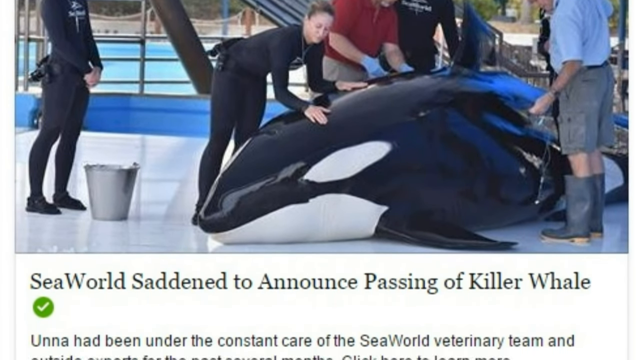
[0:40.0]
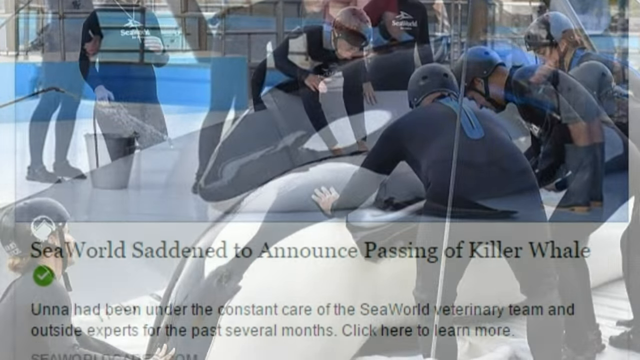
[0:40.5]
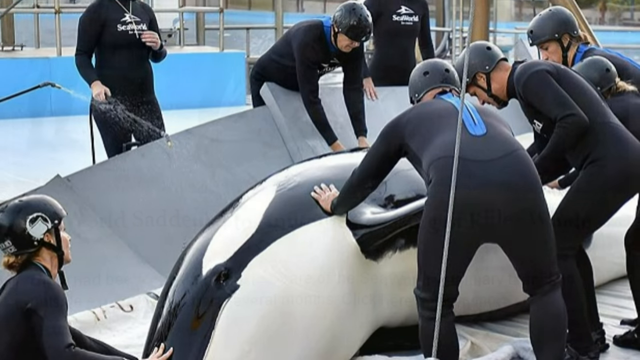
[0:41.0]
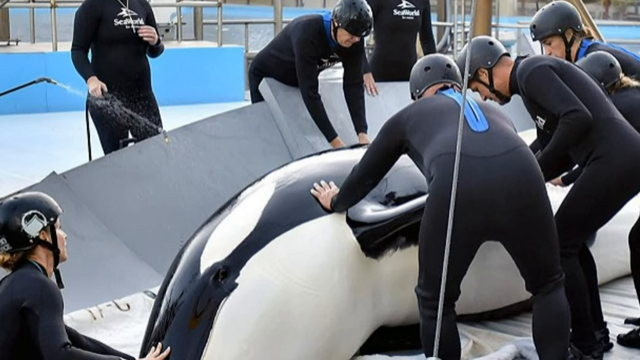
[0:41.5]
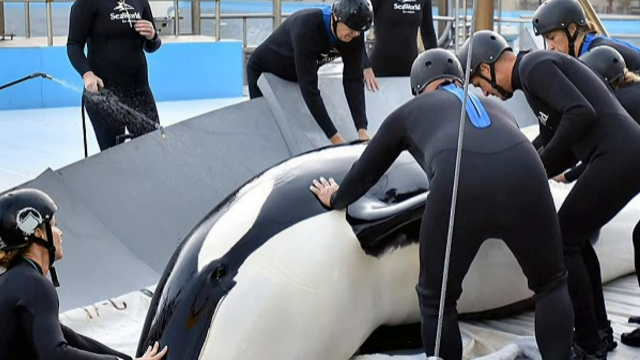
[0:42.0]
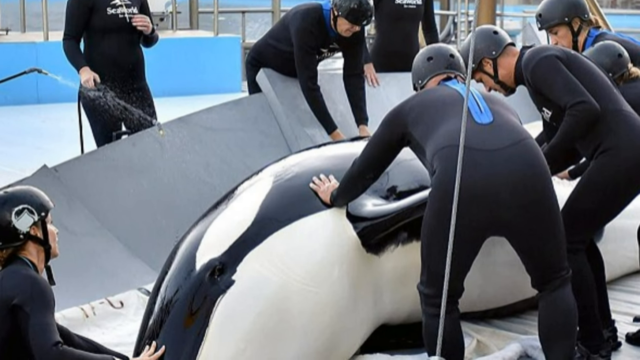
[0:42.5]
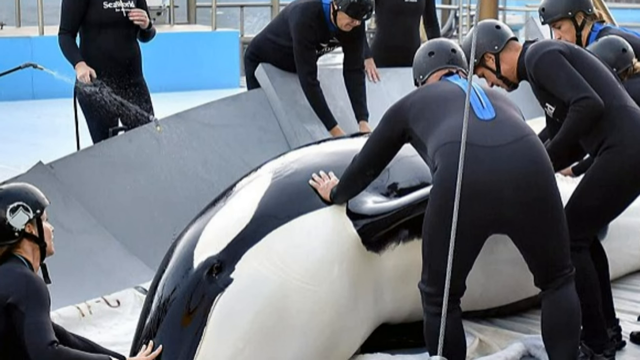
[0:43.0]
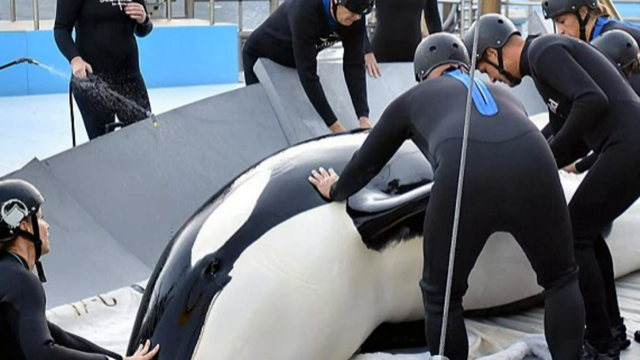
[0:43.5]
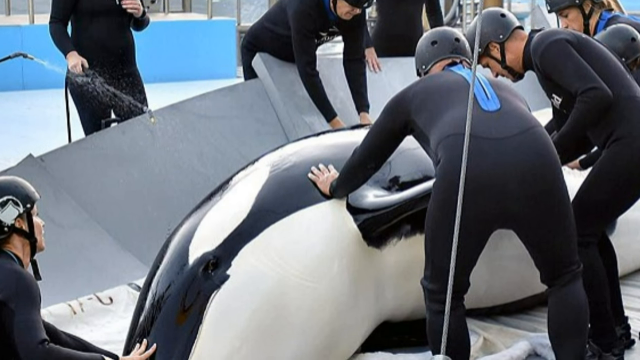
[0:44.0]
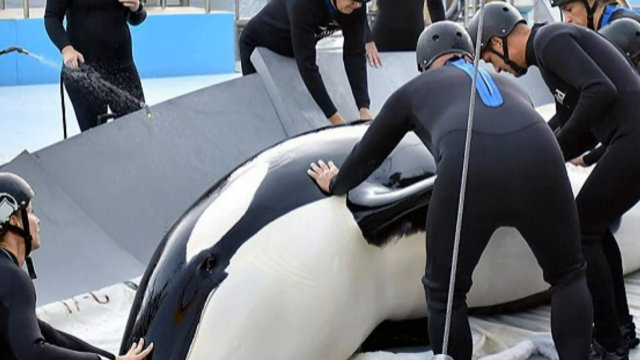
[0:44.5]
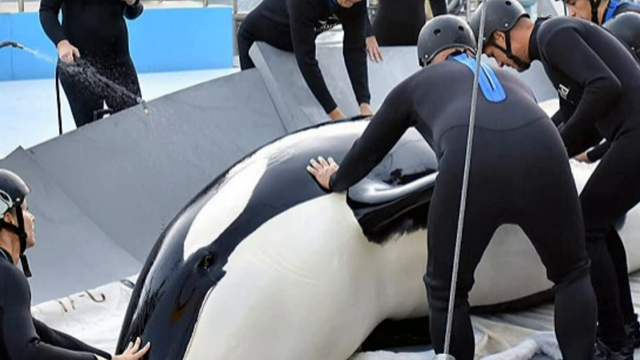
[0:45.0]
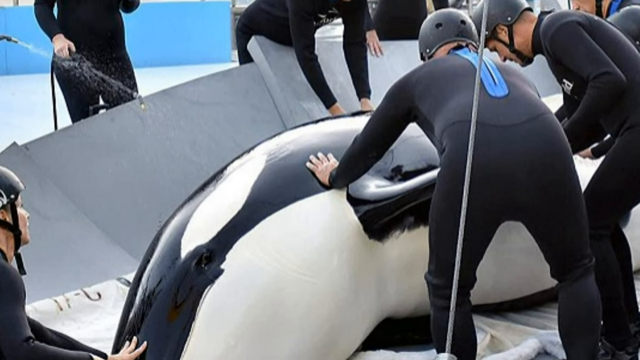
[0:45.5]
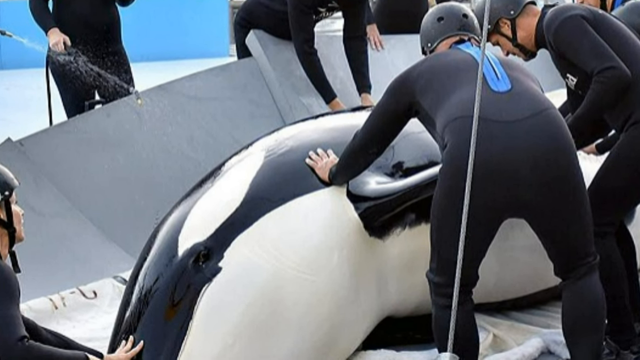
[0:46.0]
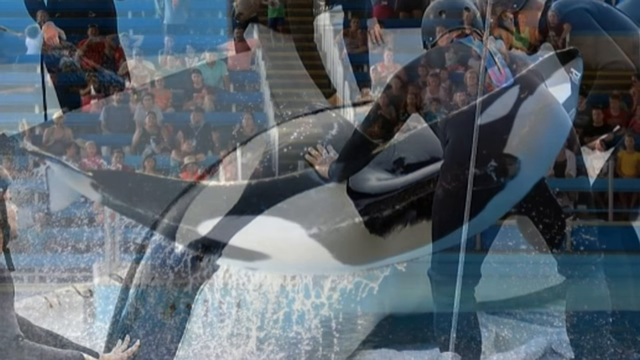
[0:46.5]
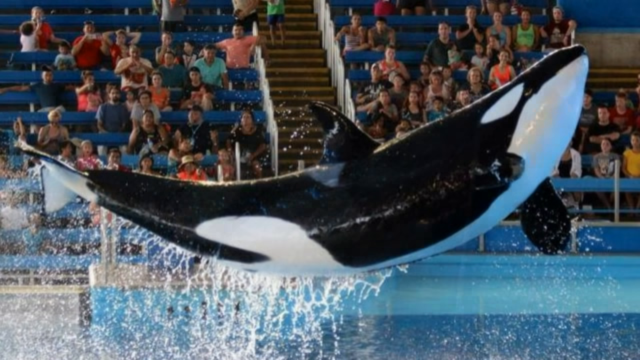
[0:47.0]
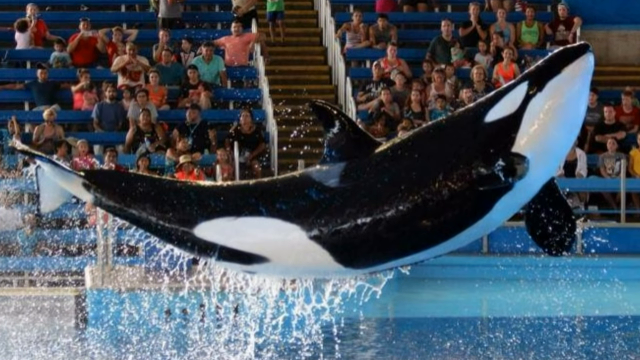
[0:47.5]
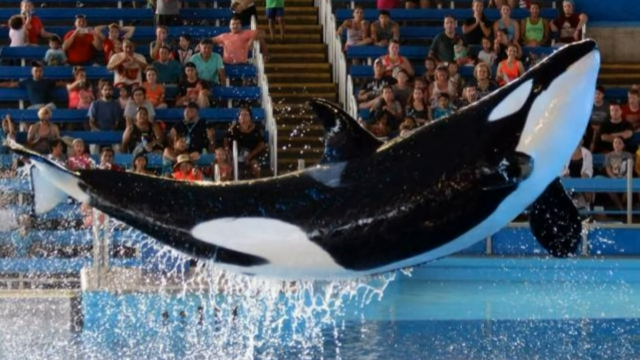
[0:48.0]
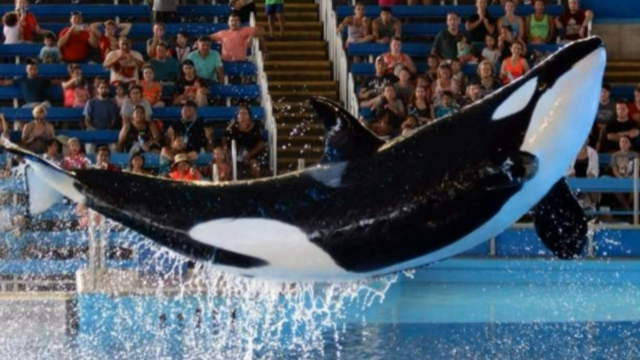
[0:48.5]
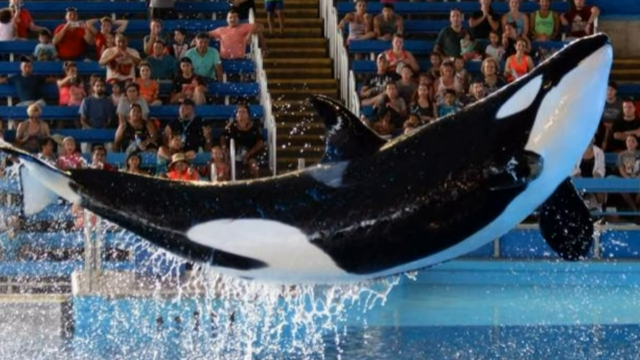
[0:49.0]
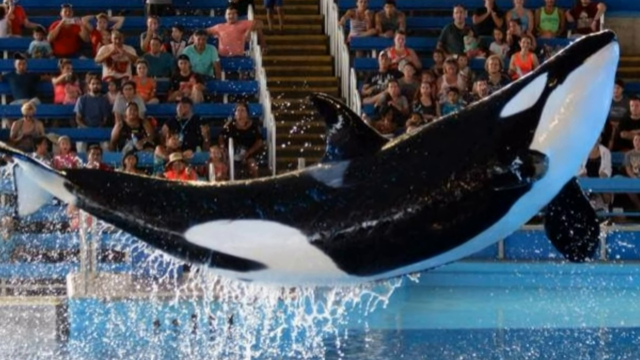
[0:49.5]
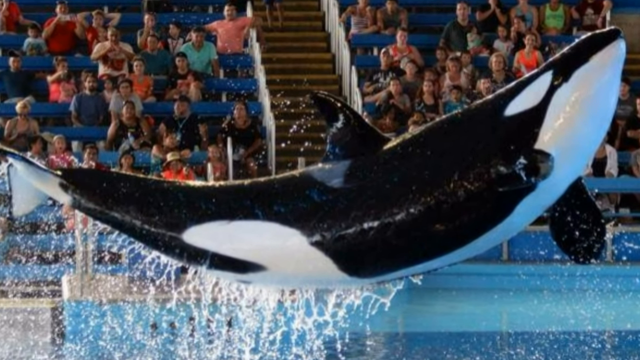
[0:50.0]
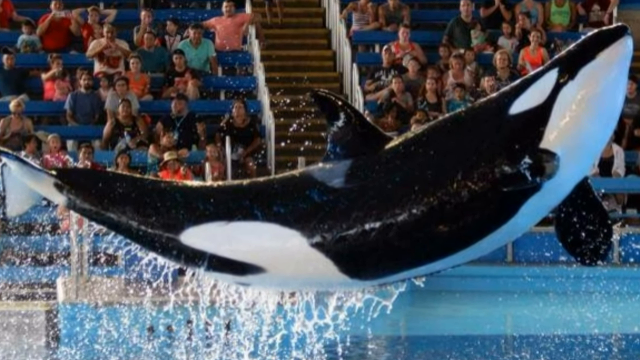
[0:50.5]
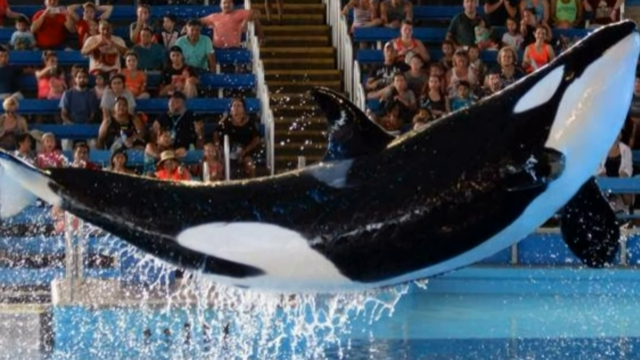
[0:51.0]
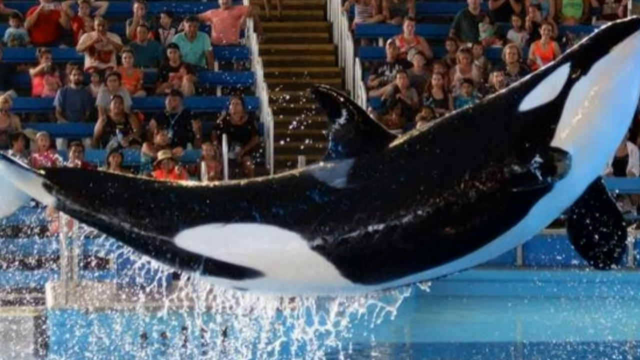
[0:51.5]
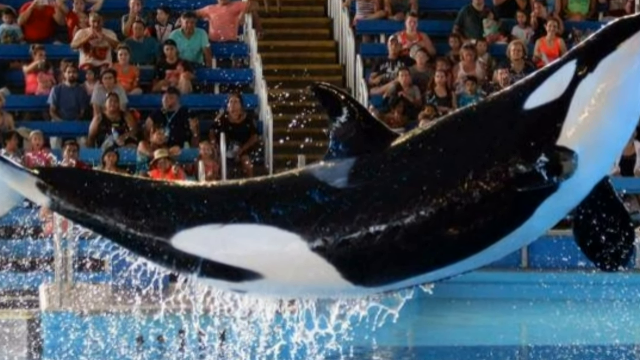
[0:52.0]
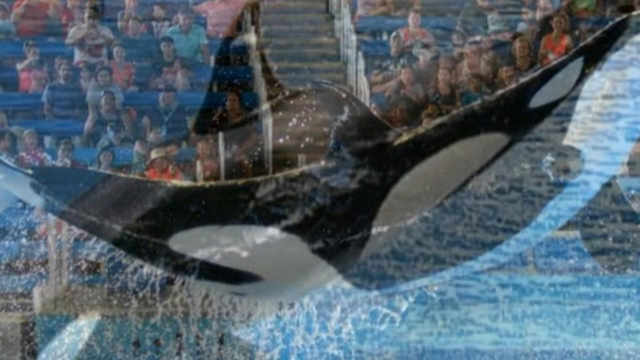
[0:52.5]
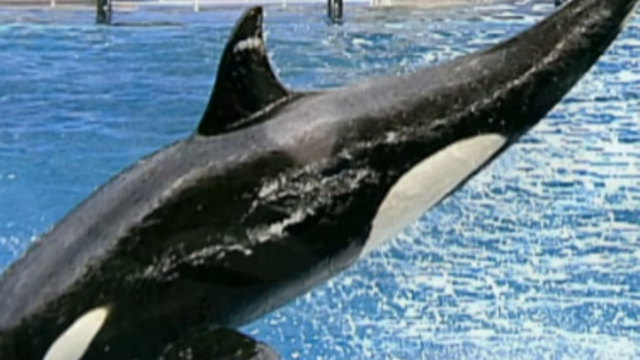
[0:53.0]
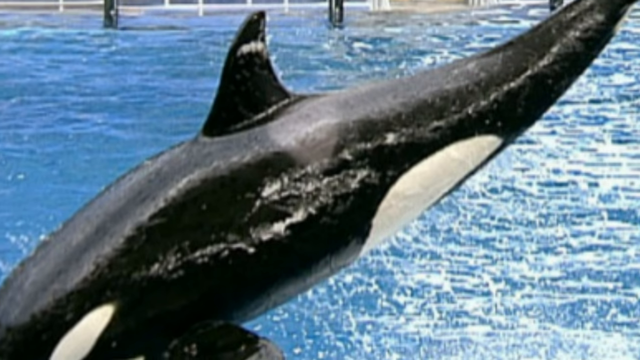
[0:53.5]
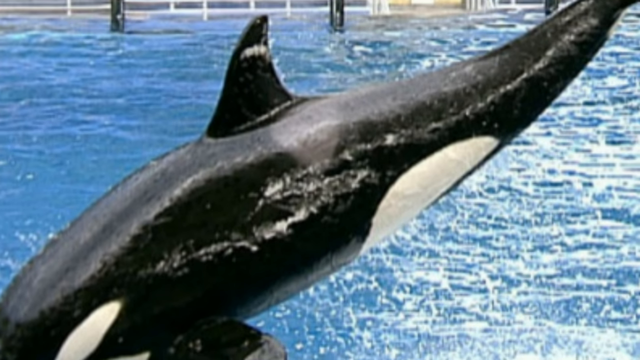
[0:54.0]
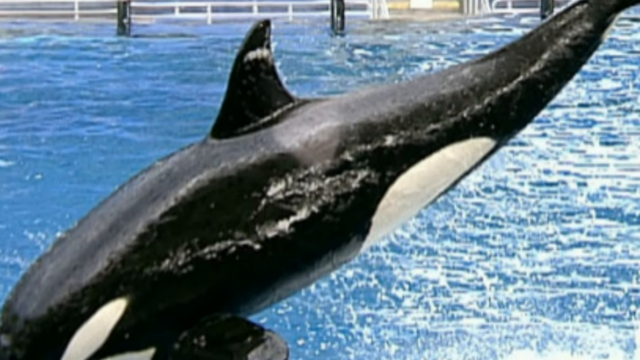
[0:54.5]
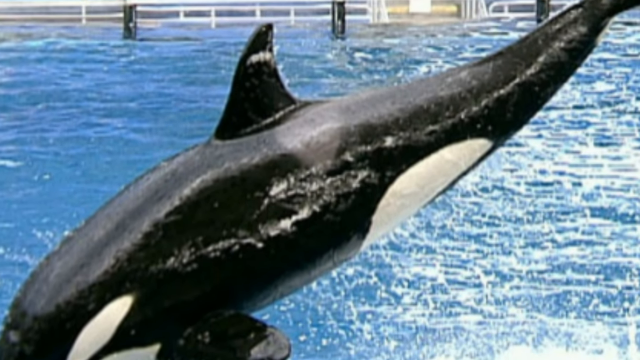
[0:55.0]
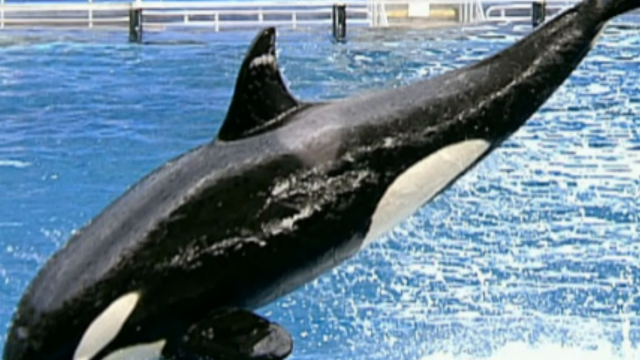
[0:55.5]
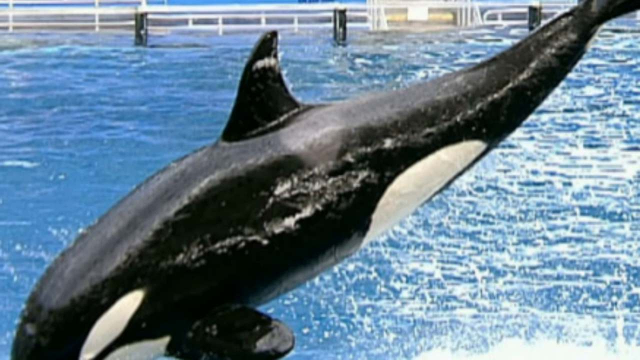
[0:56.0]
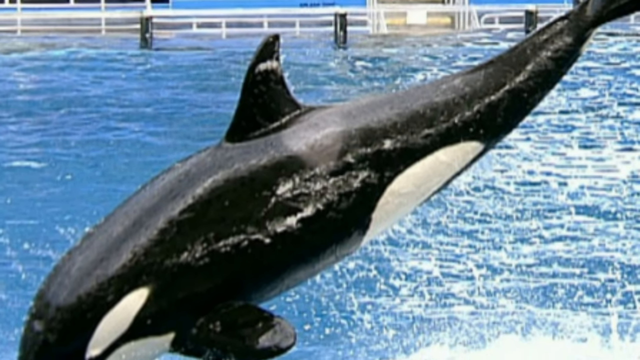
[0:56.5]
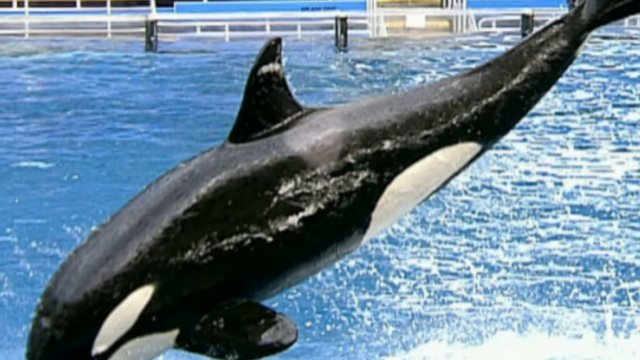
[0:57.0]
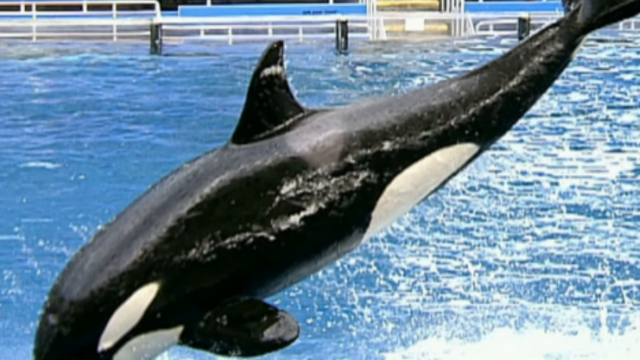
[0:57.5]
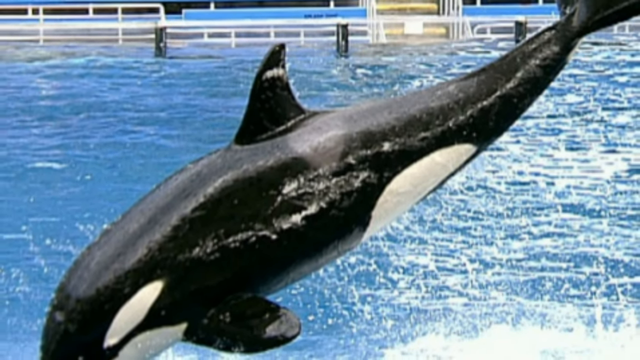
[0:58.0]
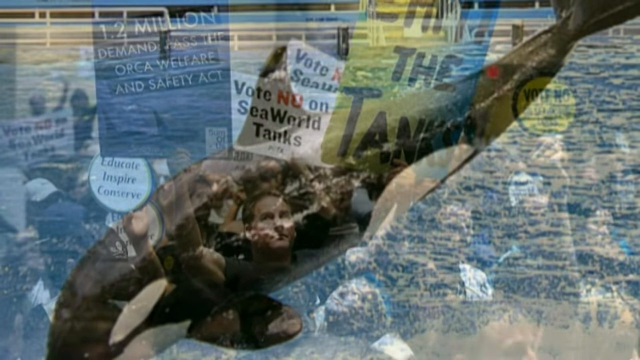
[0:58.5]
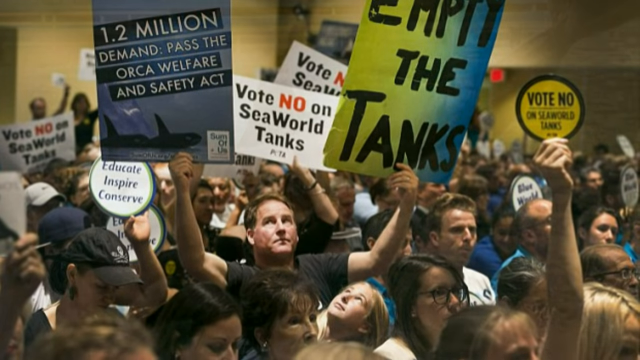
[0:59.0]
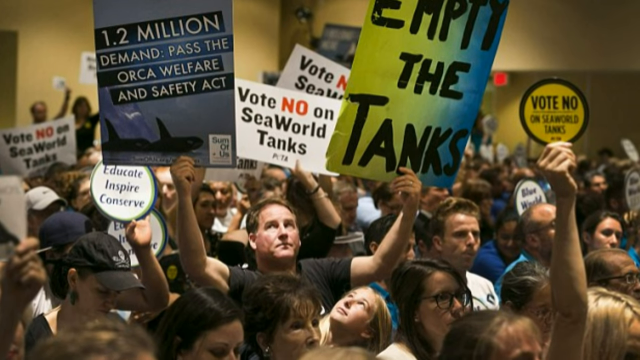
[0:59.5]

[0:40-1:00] A giant black and white orca lies outside of the water, and people dressed in black gear and black helmets touch it while one person stands and observes, as a pipe sprinkles water. The video transitions to an orca jumping in the sky in a U shape as water splashes underneath; people seated in their seats watch, and their clothes show a mix of red, green and black. Another image shows a giant black and white orca diving into the water, with a fin and tail visible. It then zooms in to a group of people inside a building holding various placards; some read "Vote" in black, "No" in red and "on seaworld tanks" in black on a white background.